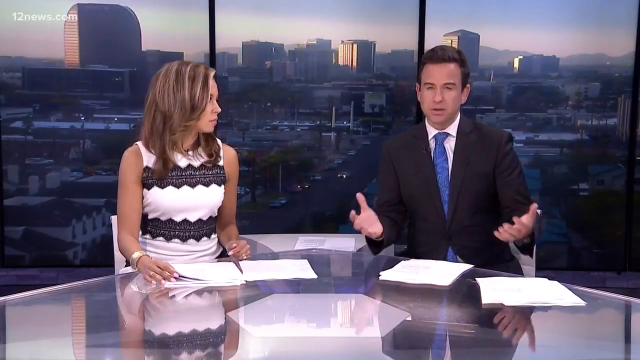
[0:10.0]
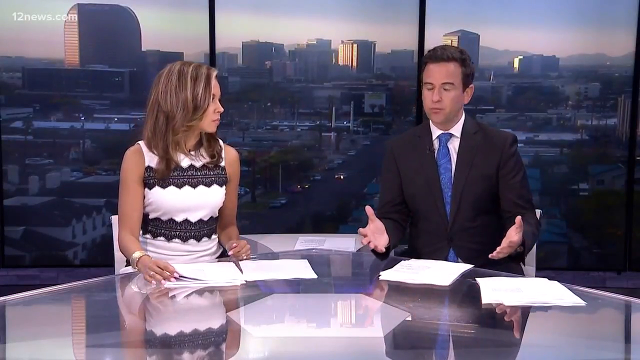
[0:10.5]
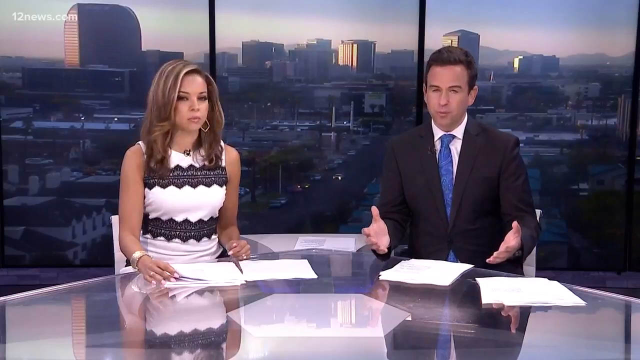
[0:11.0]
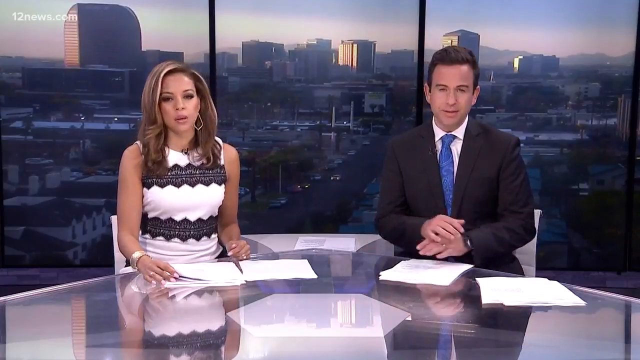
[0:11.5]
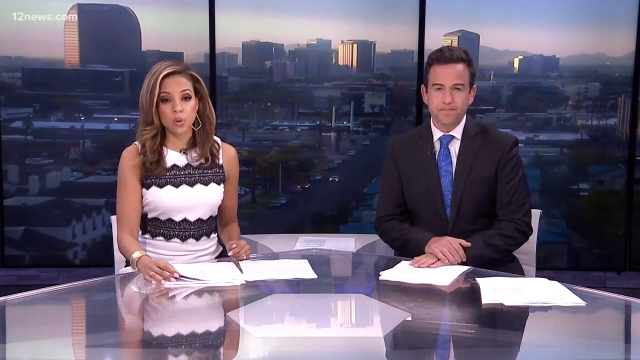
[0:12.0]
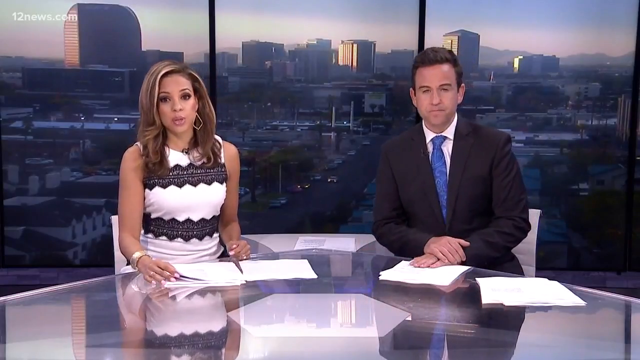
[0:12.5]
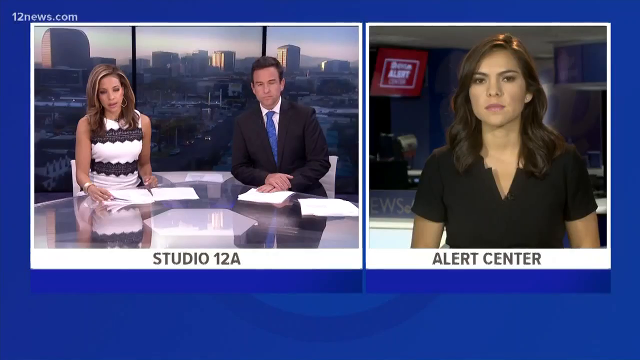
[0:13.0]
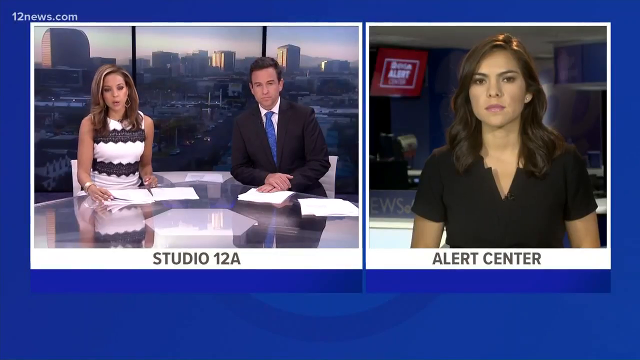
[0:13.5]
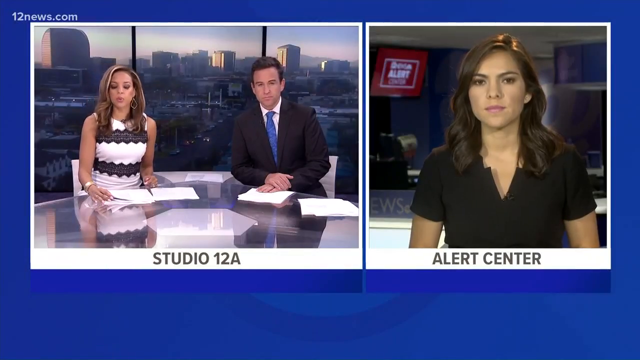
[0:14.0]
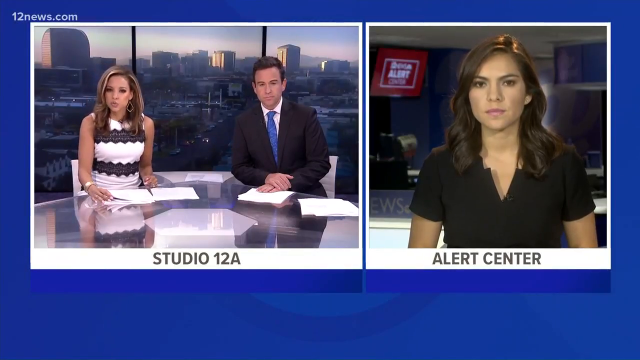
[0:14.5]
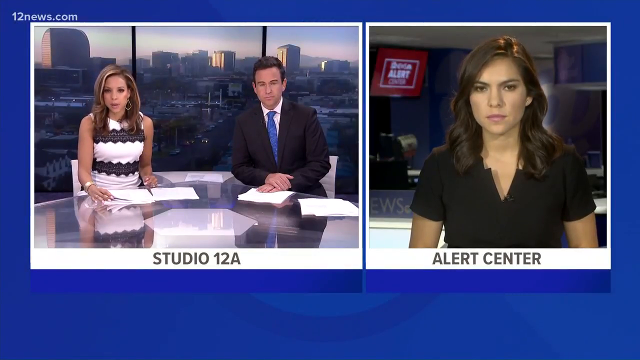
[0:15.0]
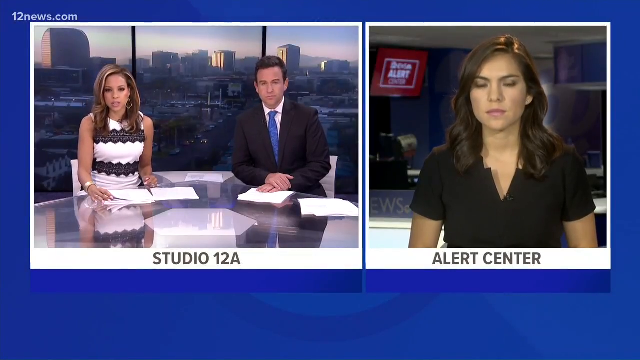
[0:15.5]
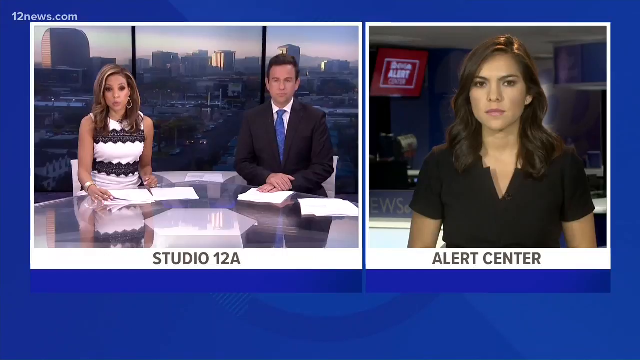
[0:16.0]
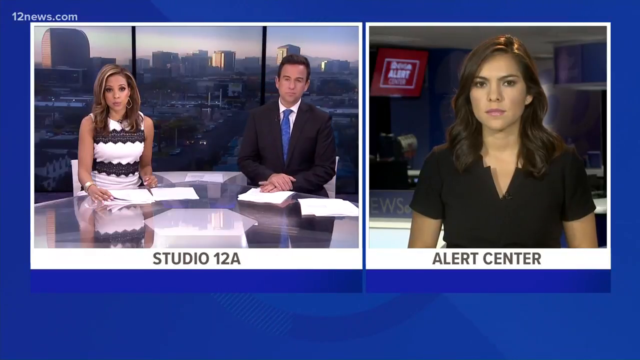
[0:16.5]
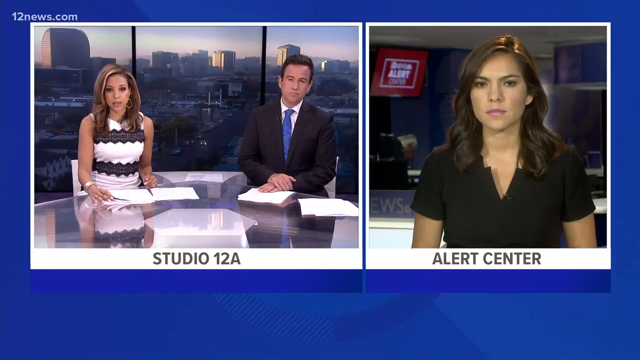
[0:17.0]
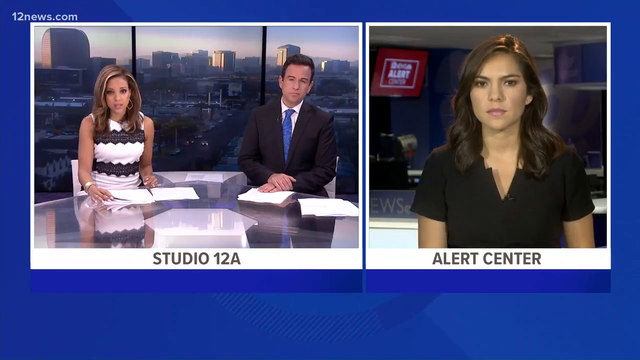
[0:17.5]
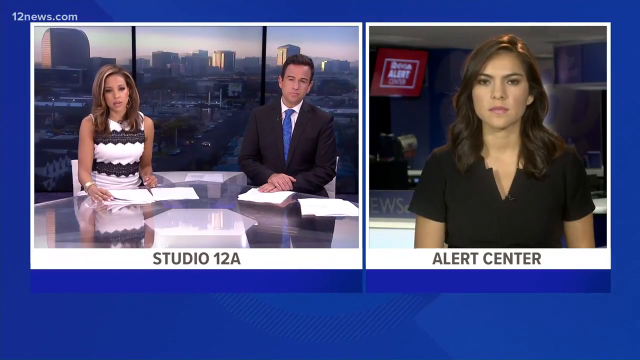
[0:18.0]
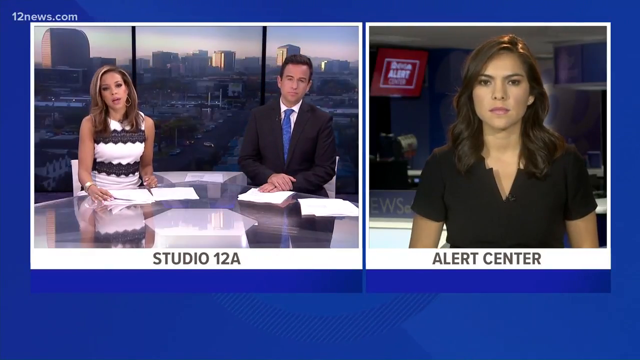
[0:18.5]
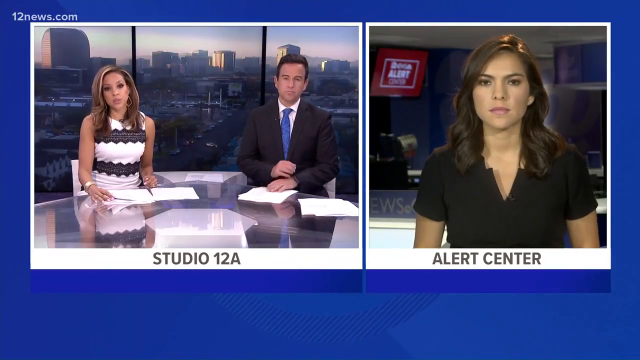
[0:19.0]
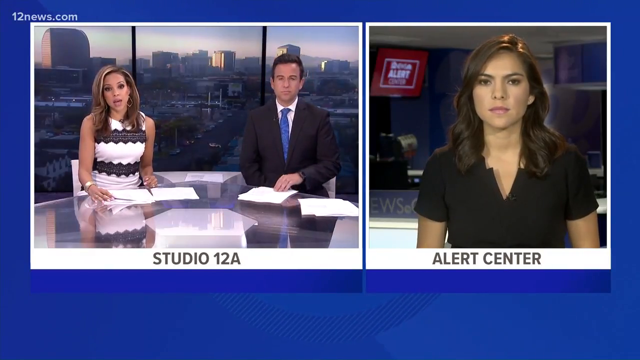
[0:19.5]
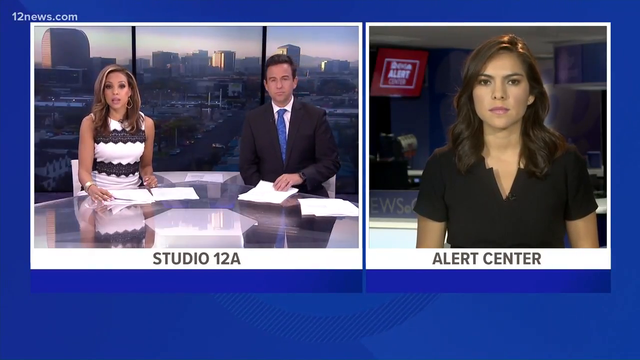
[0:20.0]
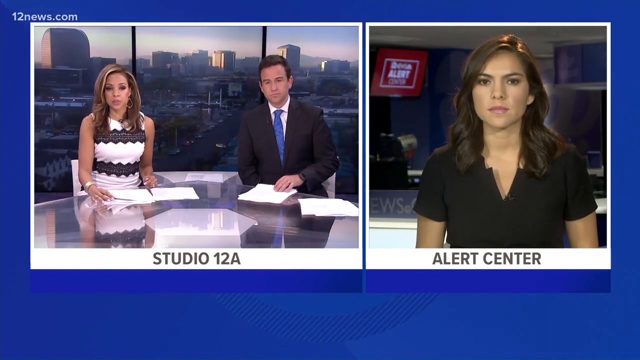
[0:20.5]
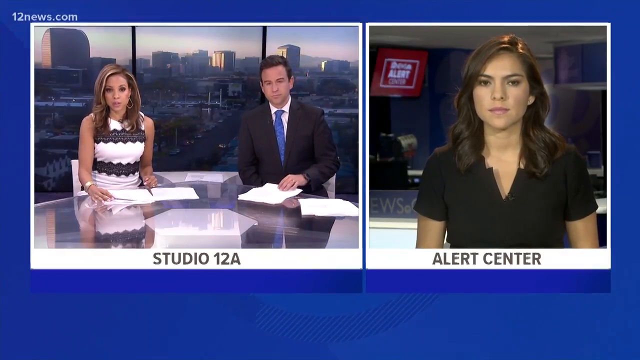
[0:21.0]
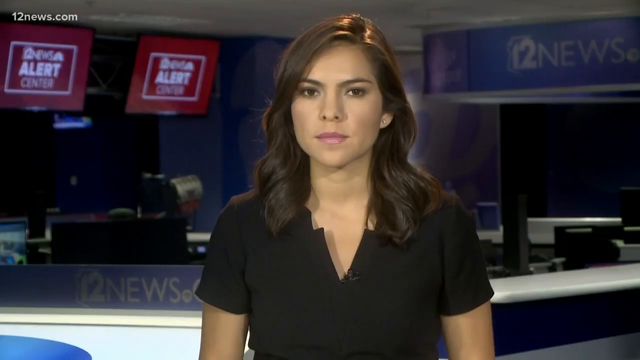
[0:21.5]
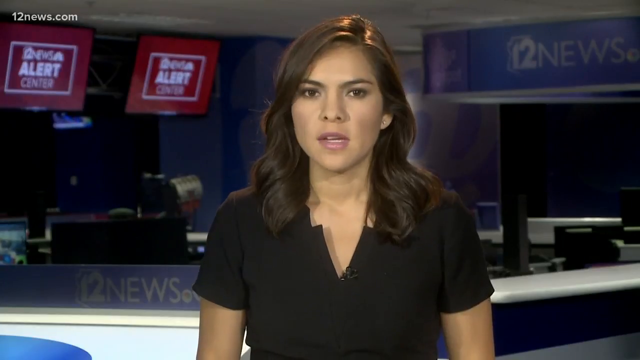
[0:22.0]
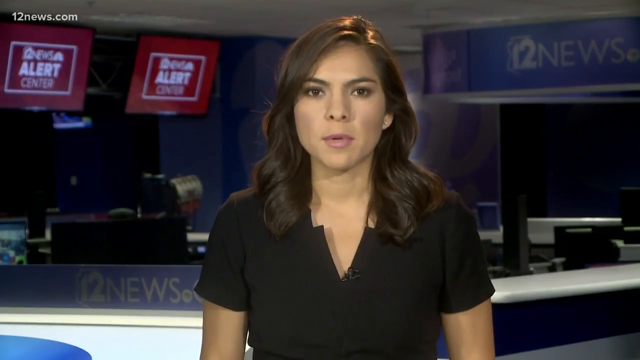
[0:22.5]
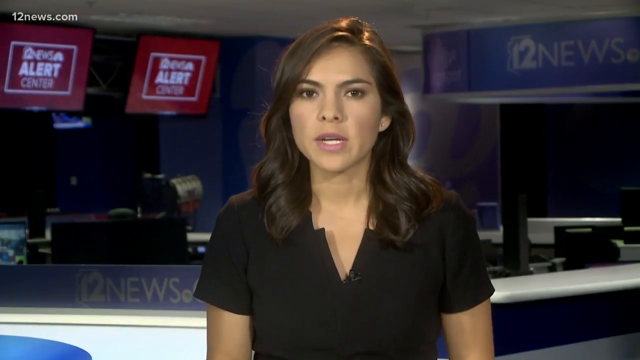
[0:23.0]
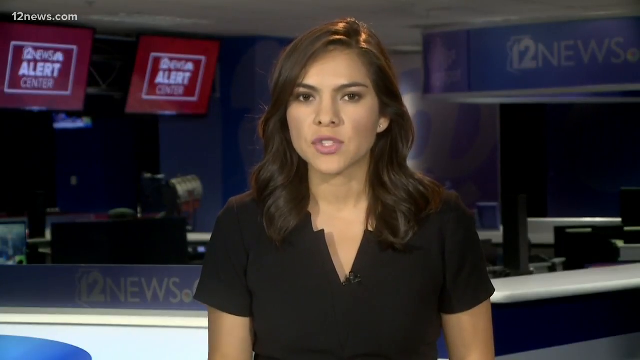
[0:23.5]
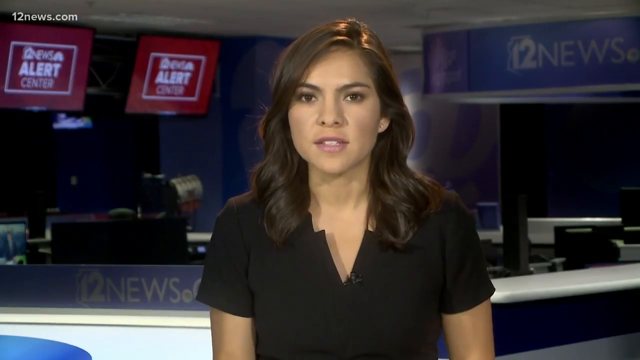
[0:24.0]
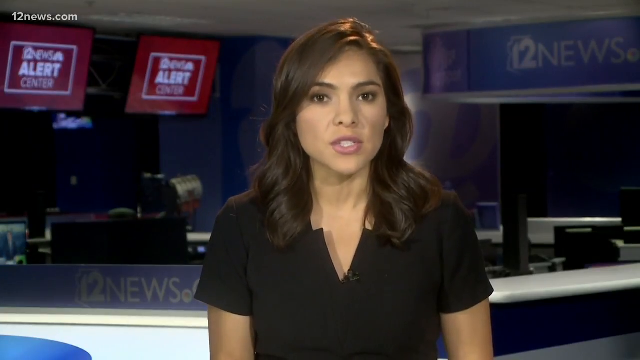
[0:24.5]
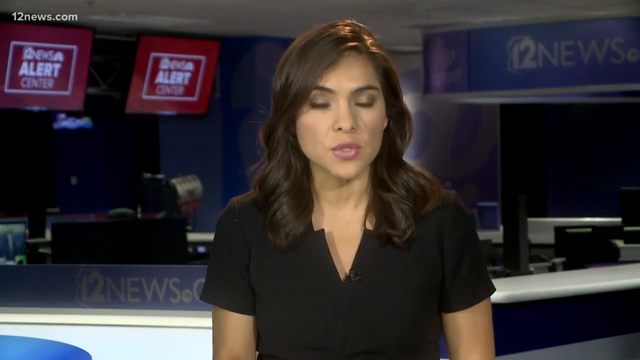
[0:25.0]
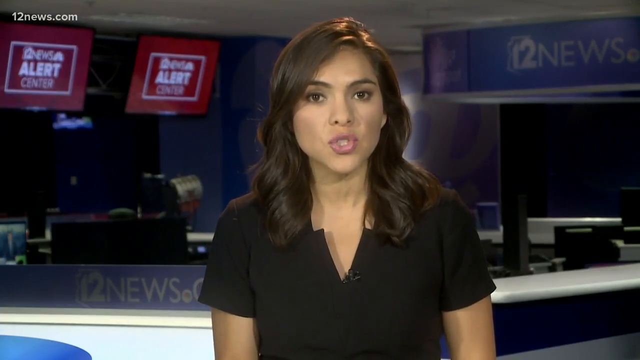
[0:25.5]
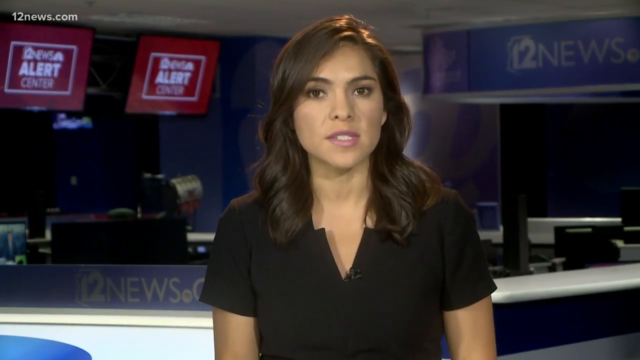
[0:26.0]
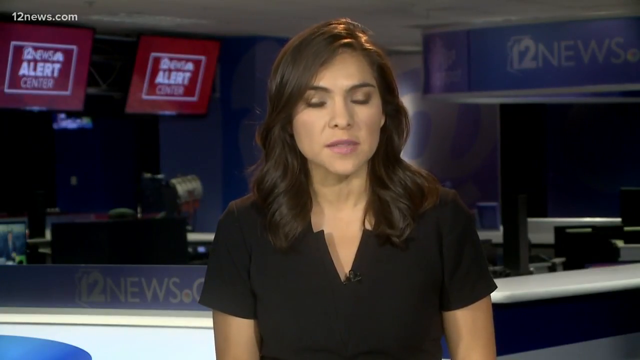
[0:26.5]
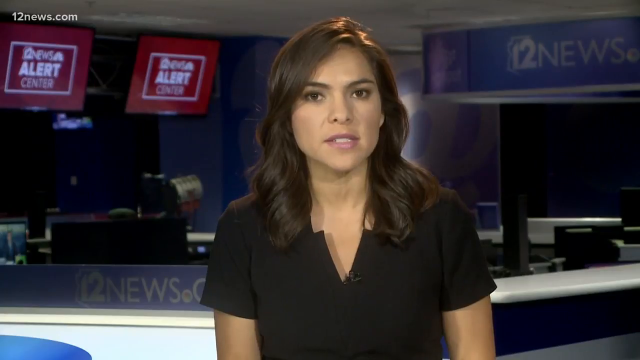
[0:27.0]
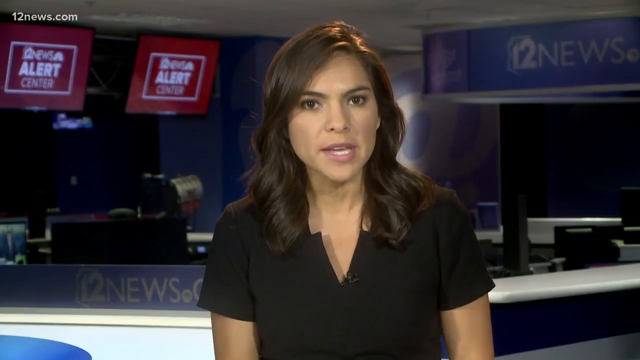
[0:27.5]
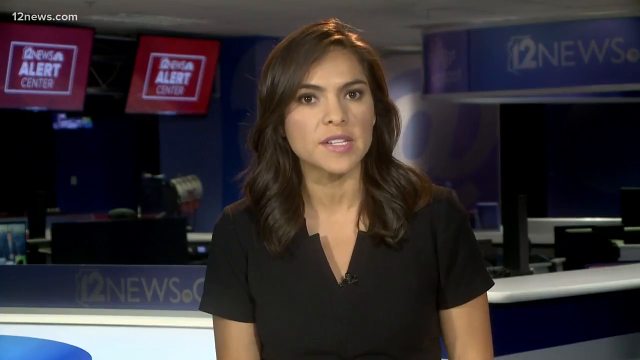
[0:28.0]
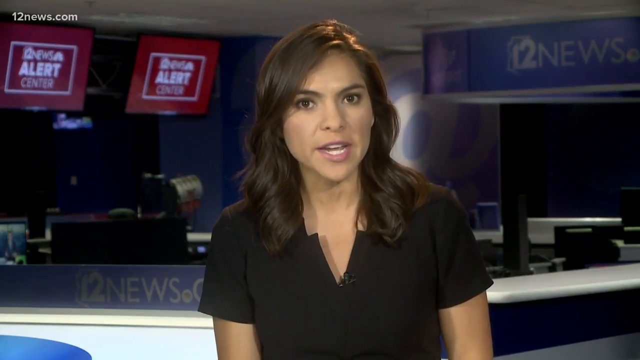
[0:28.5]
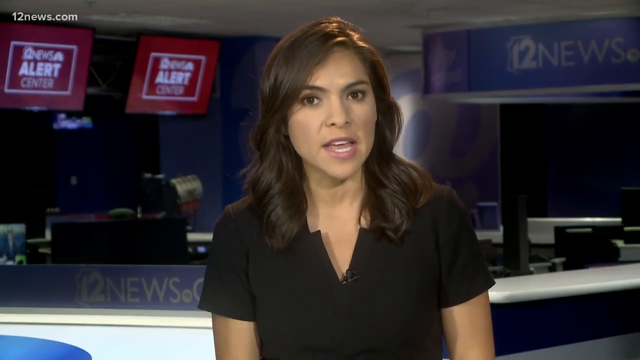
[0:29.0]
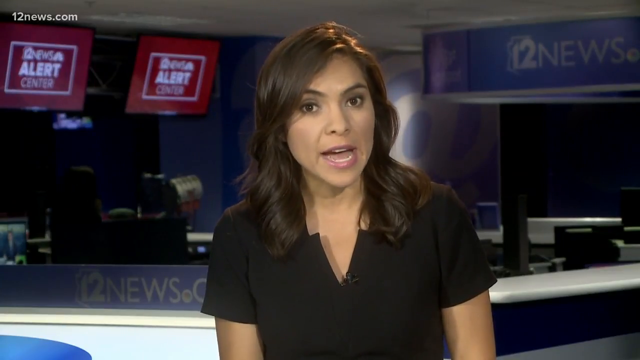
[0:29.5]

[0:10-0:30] In this news report, 12news.com is displayed in the upper left corner throughout. A male and a female news presenter sit behind a desk in a studio. The female presenter on the left has long light brown hair and wears a sleeveless white dress with wide rows of black lace on the top and near her waist. The male presenter on the right wears a black jacket and a blue tie. On the desk in front of them are four piles of papers, and on screens behind them is projected video looking out at the skyline of a small town. As the report progresses, the screen changes to show the two presenters in an inset video on one side, labeled underneath as "Studio 12A", and a female reporter in another studio in an inset video on the right side, labeled "Alert Center". They appear to speak back and forth, and then the screen changes to show just the female presenter. She stands in a news studio with the 12news logo on the wall behind her on the right; on the left are two video monitors showing a red 12news alert center graphic. She has long dark brown hair, wears a short-sleeved black shirt or dress, and speaks directly to the camera.